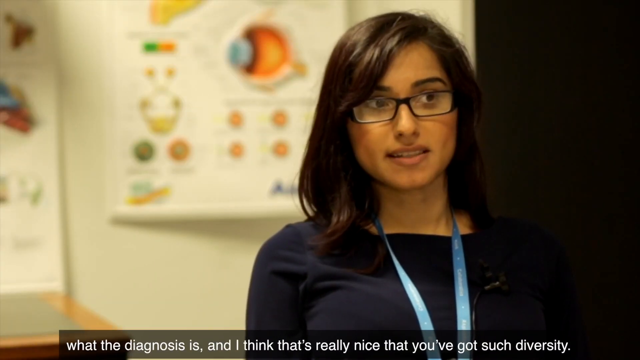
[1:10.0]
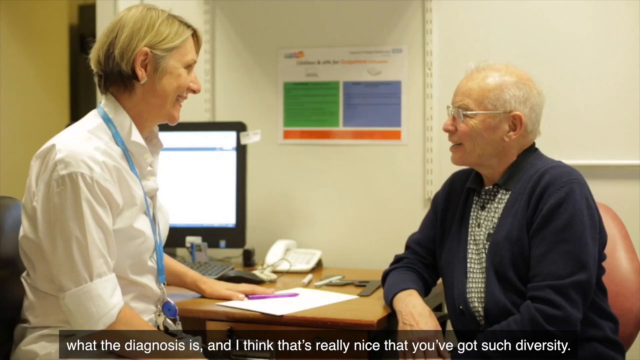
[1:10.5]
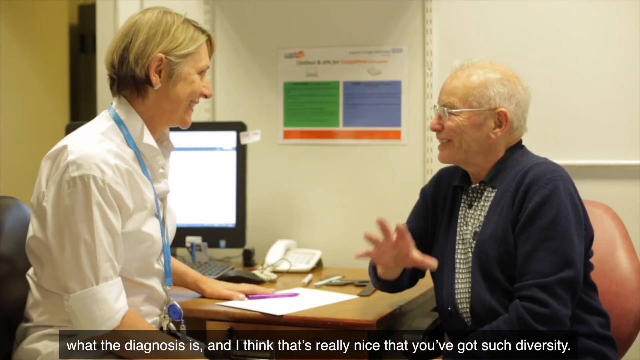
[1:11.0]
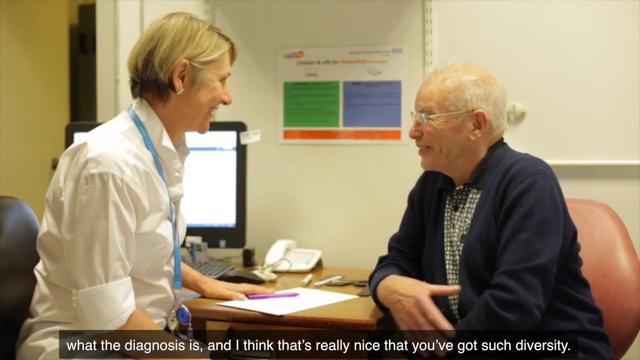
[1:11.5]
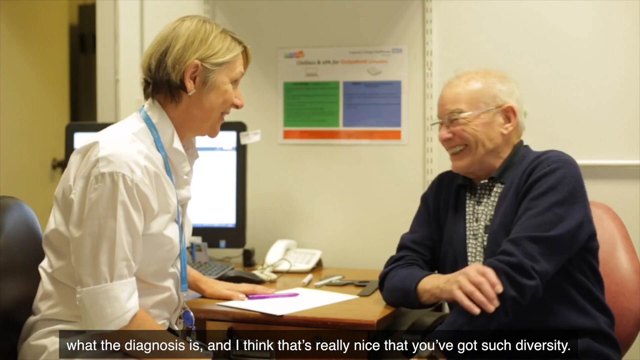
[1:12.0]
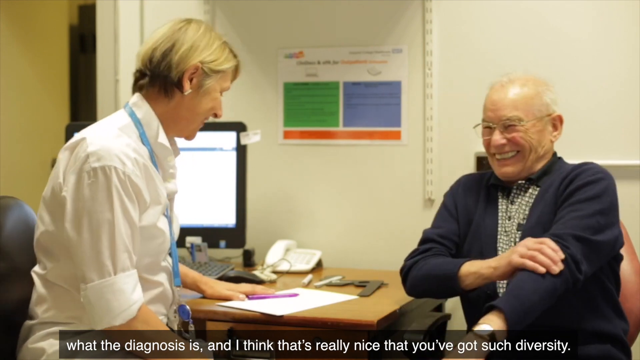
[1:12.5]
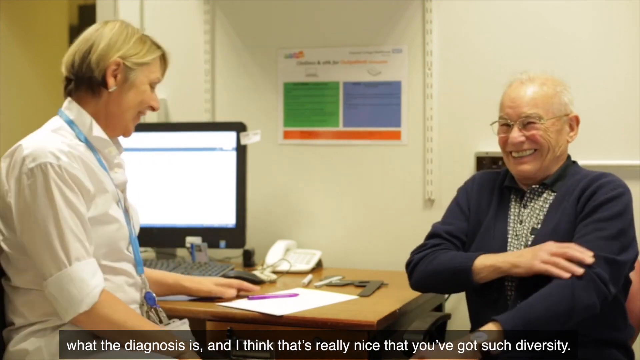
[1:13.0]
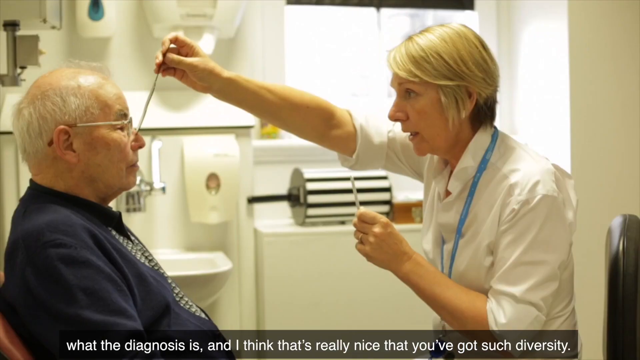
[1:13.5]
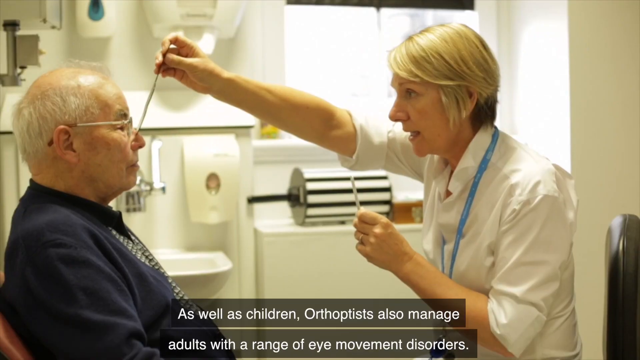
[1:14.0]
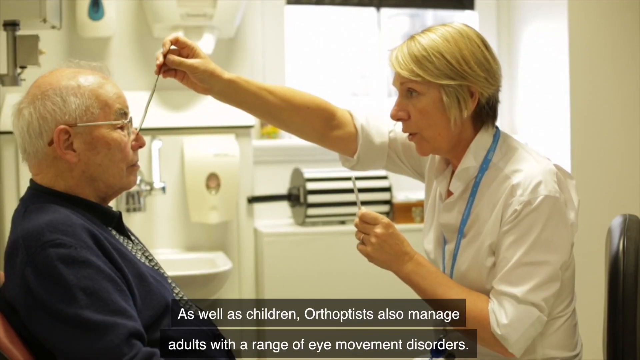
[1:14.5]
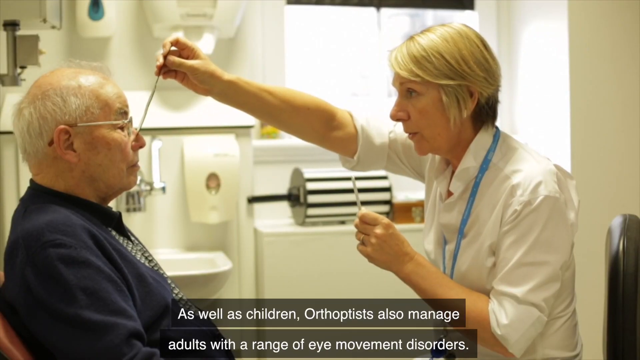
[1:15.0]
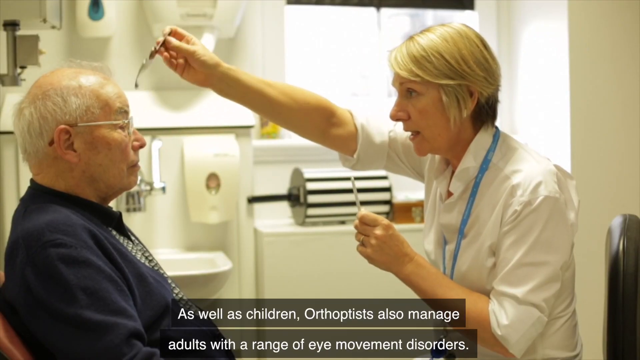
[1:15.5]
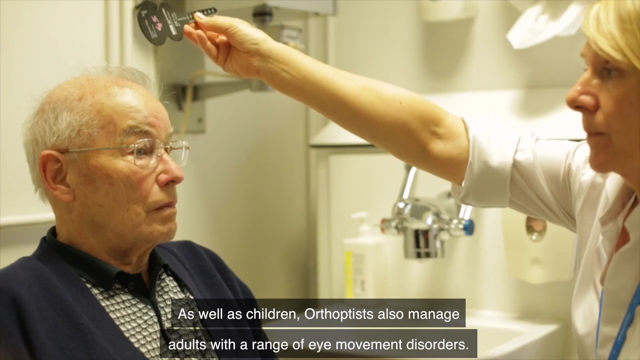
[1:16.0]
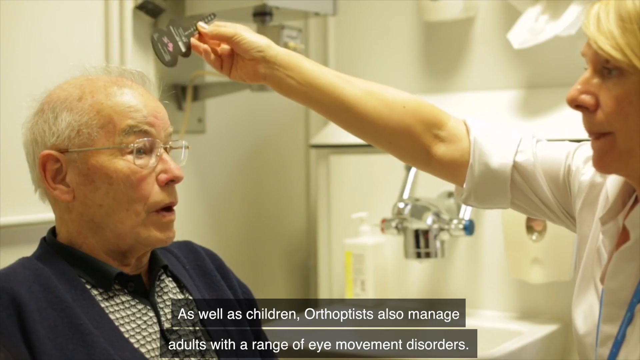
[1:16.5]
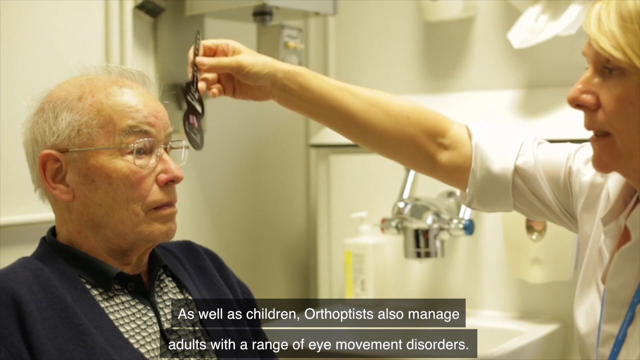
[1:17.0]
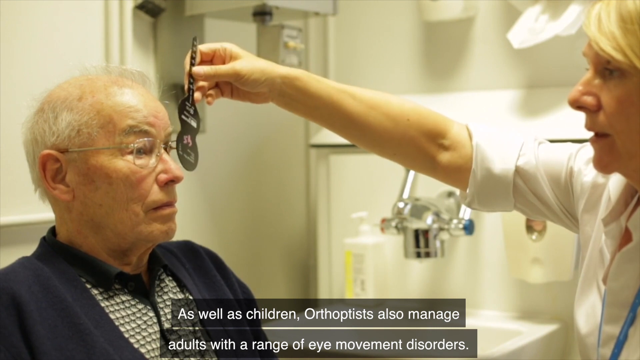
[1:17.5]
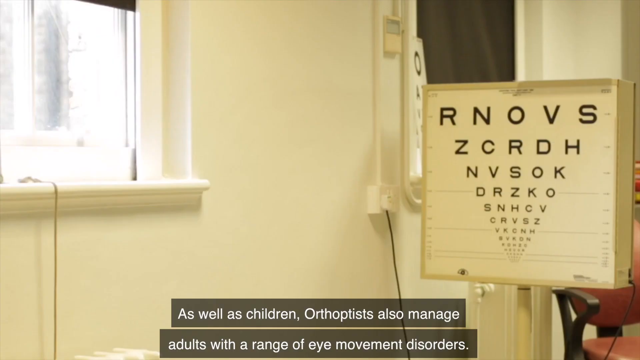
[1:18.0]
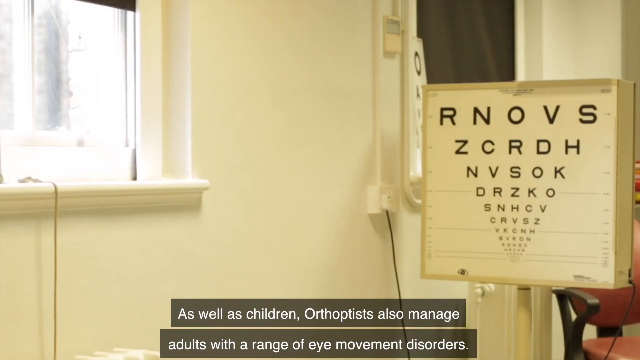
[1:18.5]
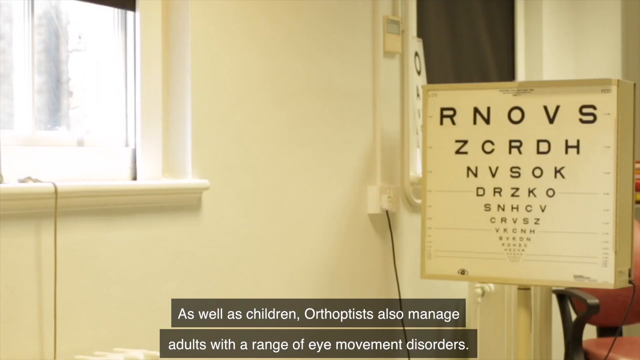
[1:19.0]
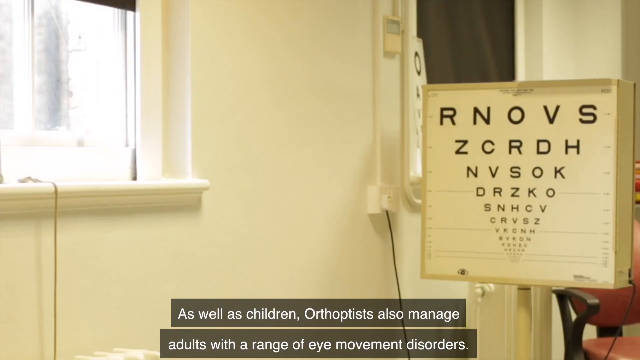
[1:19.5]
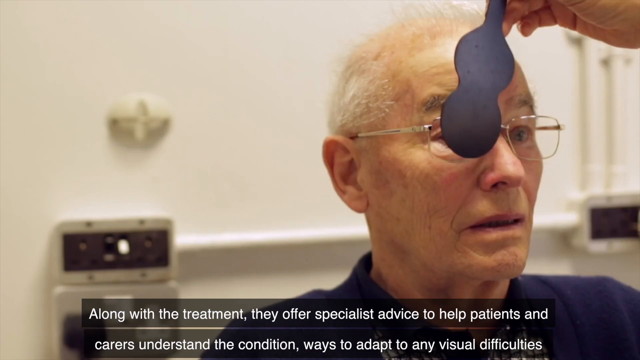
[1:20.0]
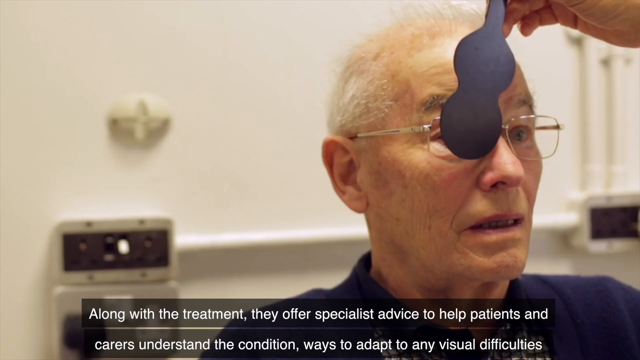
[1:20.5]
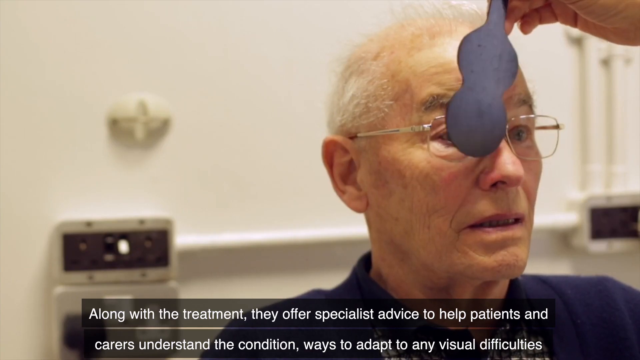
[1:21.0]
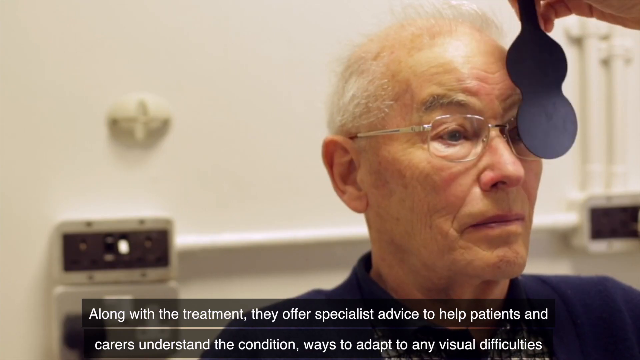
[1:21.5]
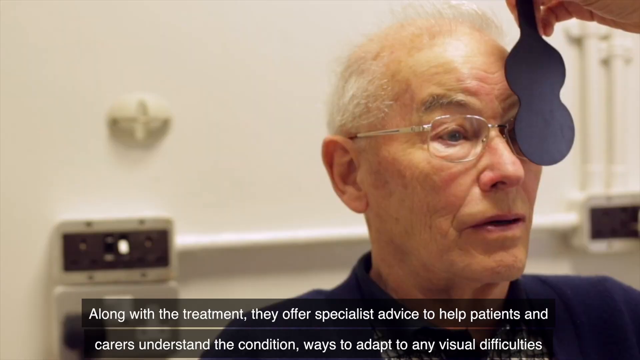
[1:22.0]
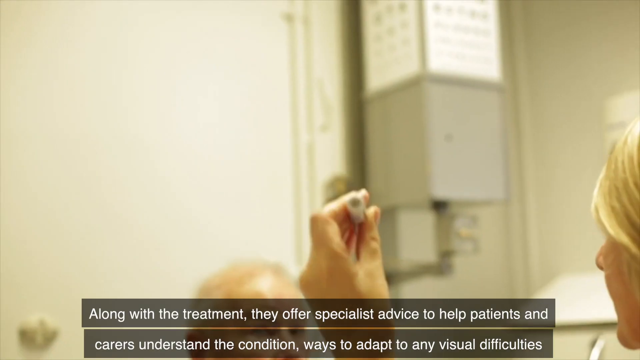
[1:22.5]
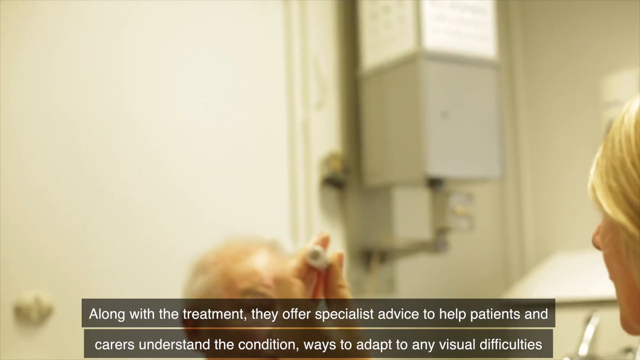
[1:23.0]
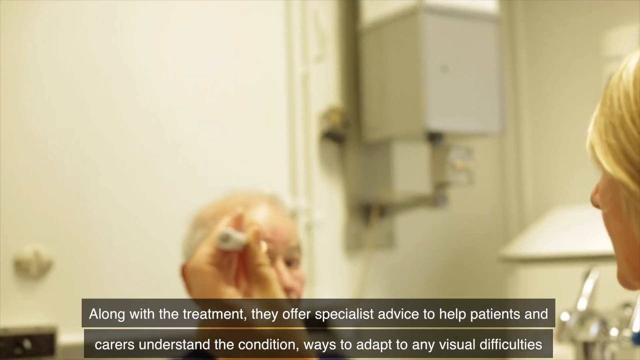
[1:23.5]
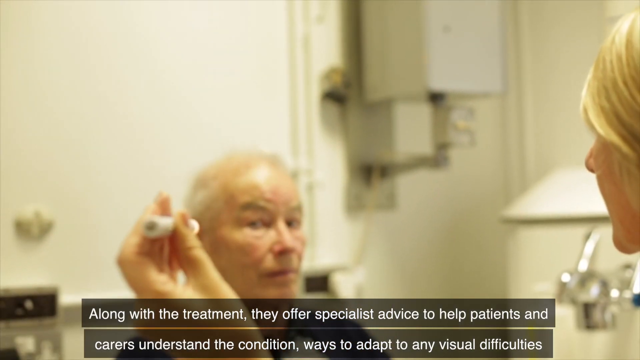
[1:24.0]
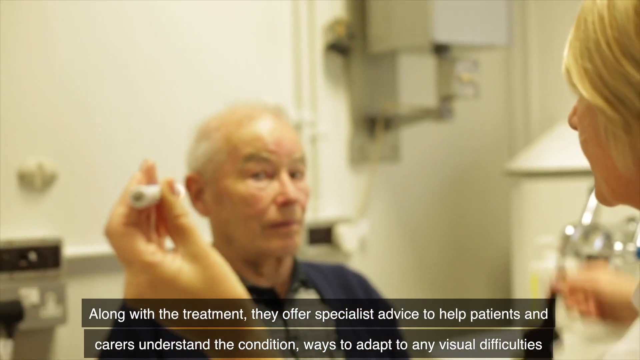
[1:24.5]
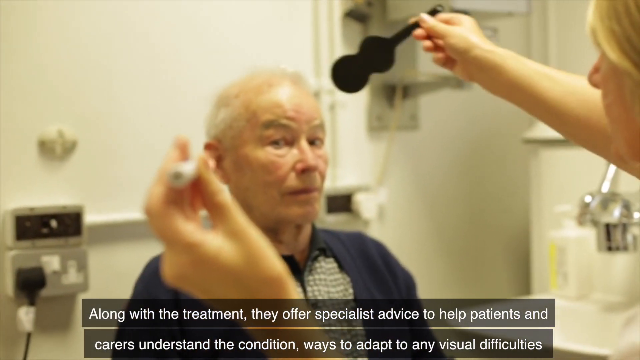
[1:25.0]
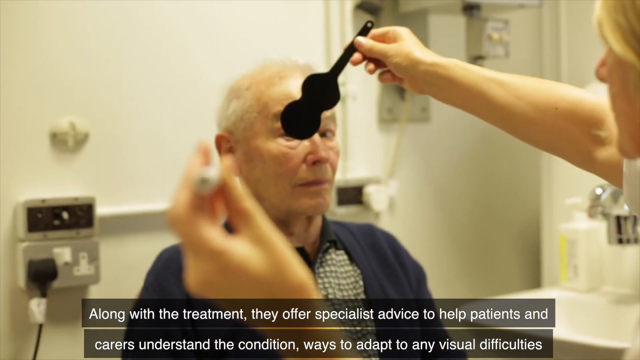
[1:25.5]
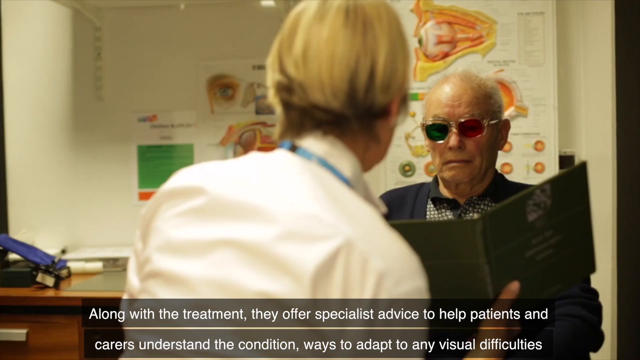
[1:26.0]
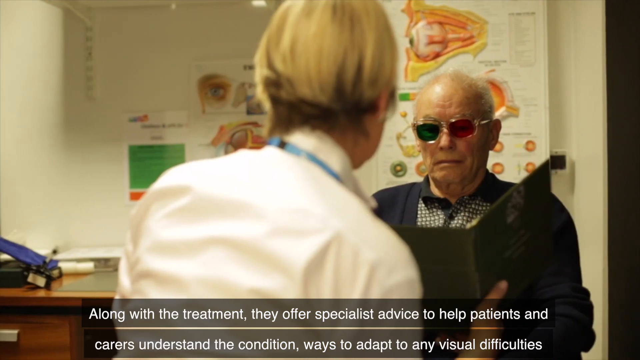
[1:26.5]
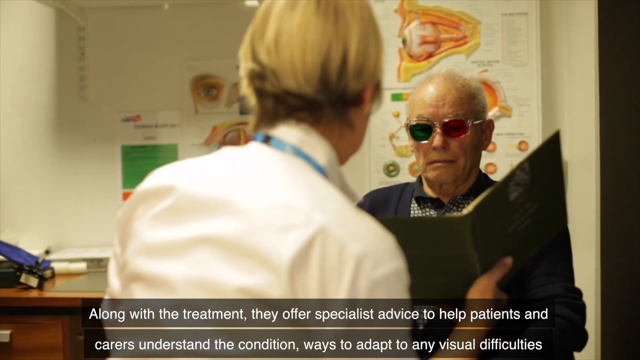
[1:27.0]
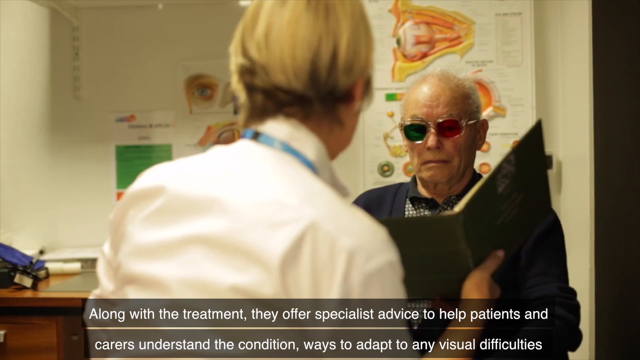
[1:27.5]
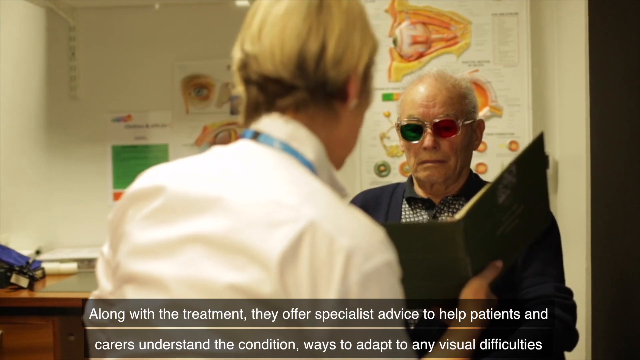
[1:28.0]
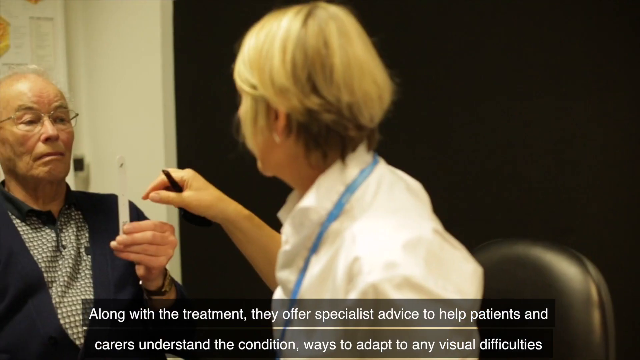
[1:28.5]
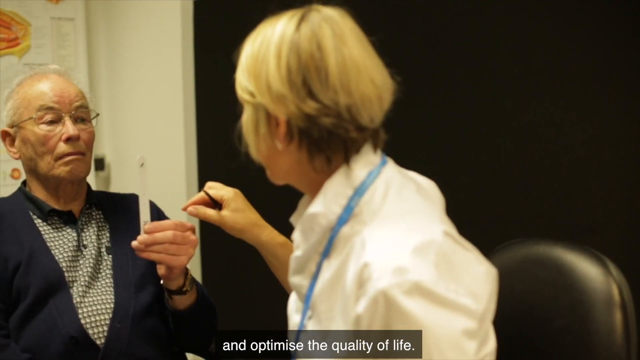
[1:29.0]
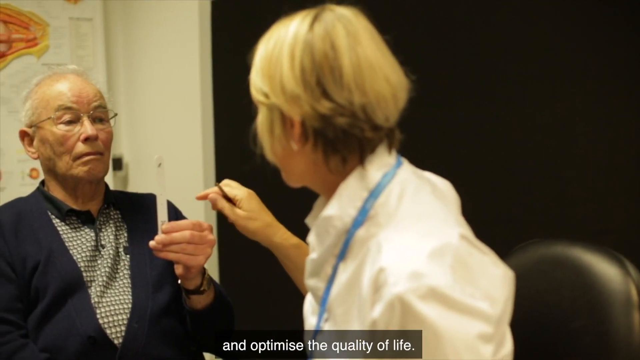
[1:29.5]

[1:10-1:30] A doctor with short blonde hair, wearing a white shirt with the sleeves rolled up, sits in a dark chair at a brown desk with a computer screen beside her, speaking to an older patient sitting across the desk. He wears a dark blue sweater over a striped blue and gray shirt, has thinning gray hair and glasses, and smiles as he talks, his right hand kind of raised as though making a point. In the next scene she checks his eyes, holding a little paddle in front of one eye while he keeps the other eye closed. He looks at an eye chart, and she moves the paddle from one eye to the other. Then she puts the dark glasses on him, and he tries to read something for her.